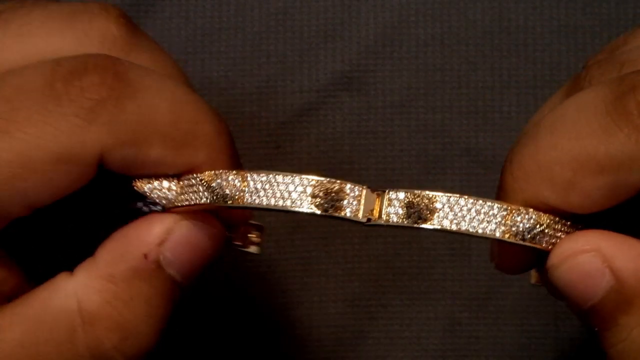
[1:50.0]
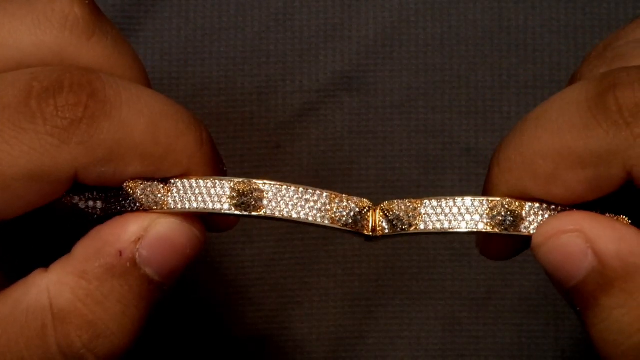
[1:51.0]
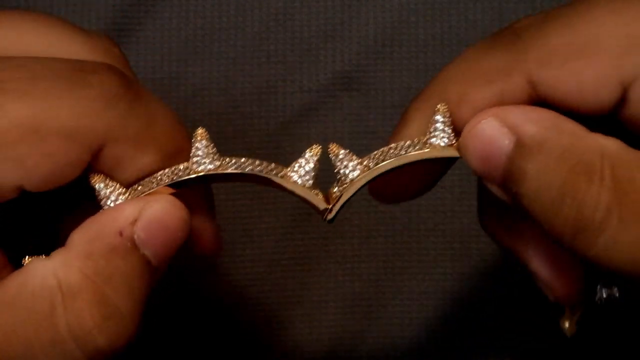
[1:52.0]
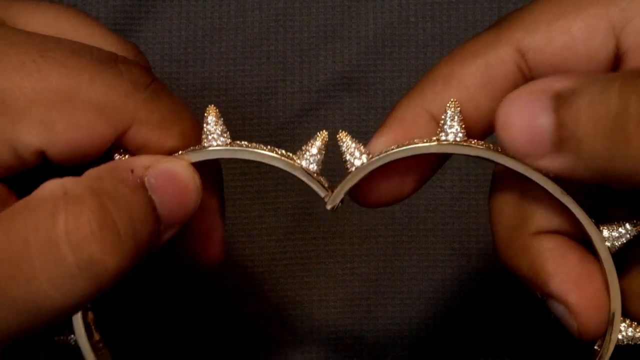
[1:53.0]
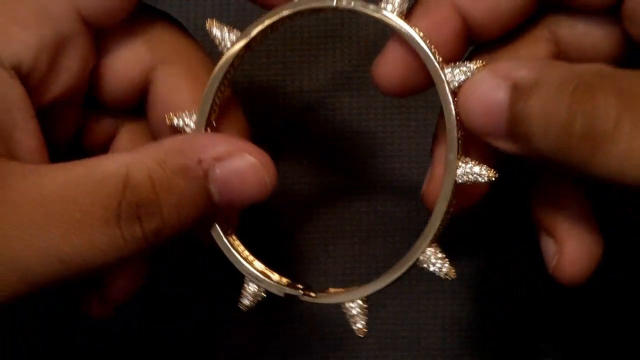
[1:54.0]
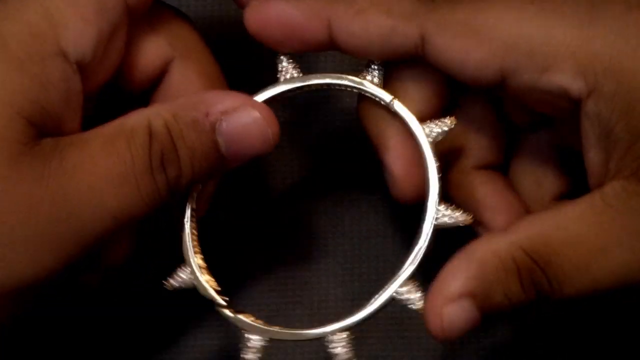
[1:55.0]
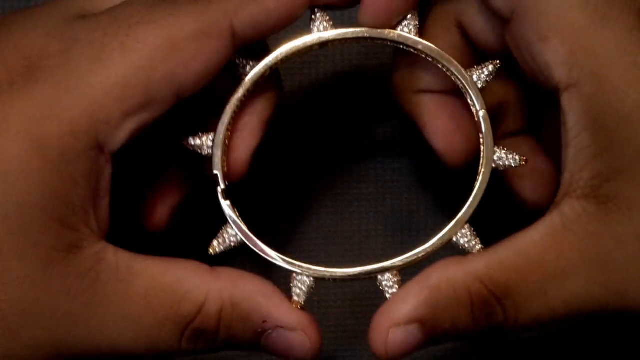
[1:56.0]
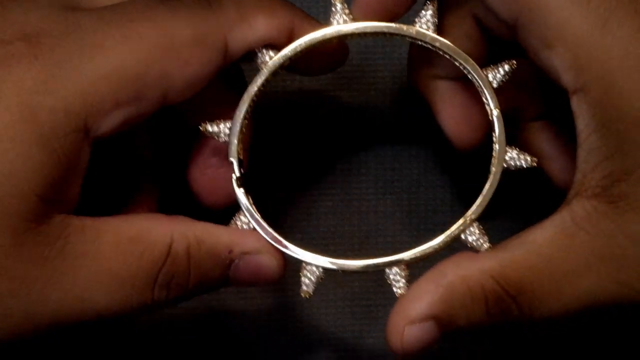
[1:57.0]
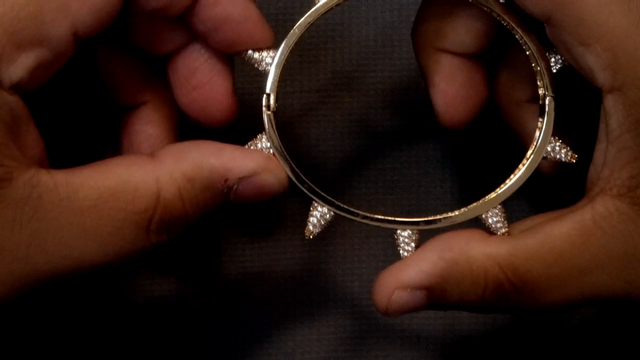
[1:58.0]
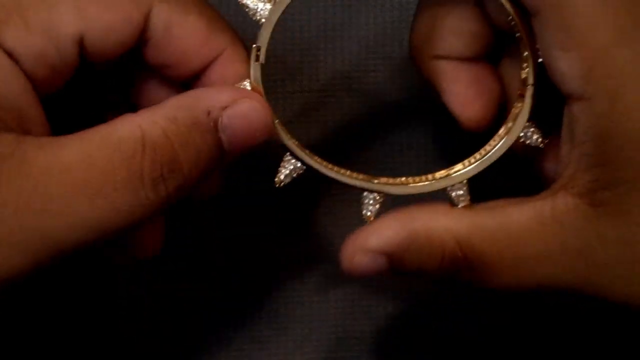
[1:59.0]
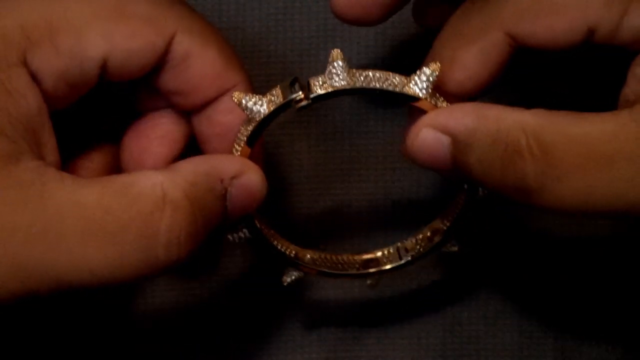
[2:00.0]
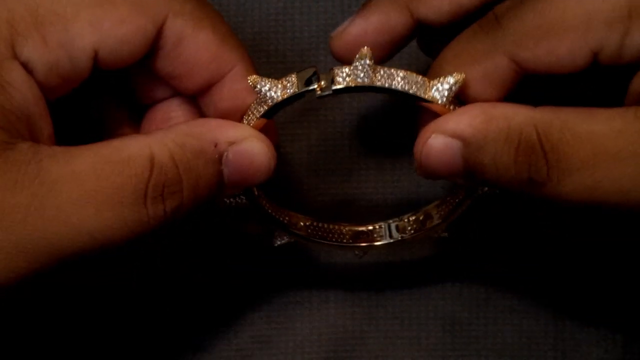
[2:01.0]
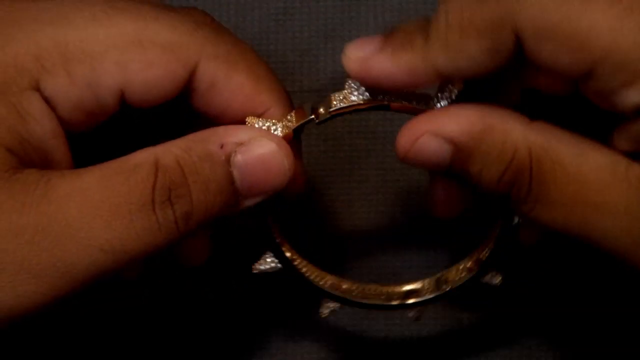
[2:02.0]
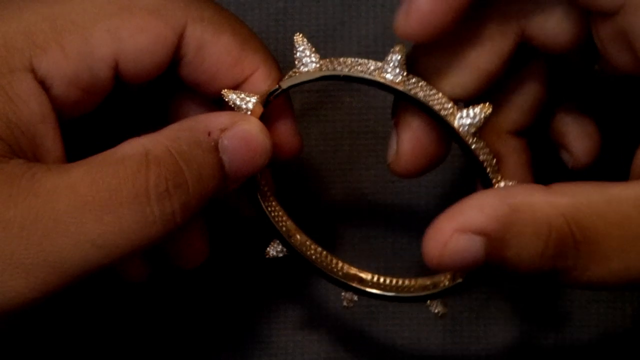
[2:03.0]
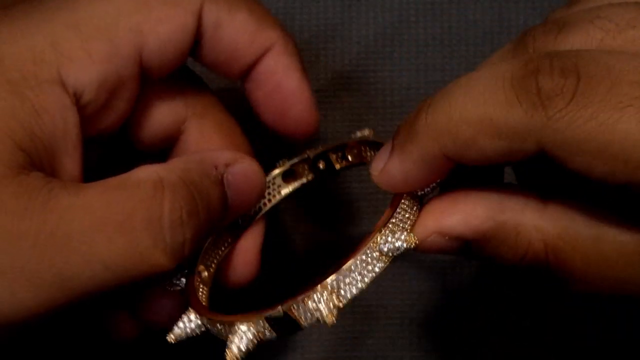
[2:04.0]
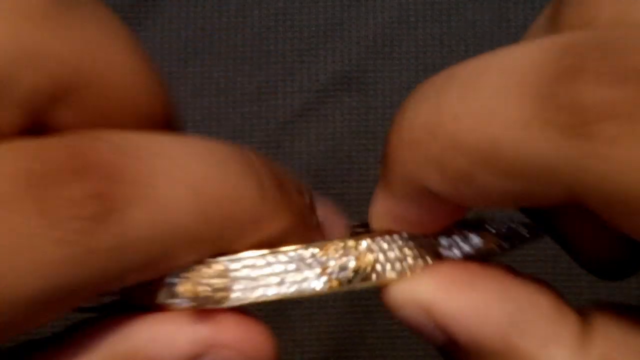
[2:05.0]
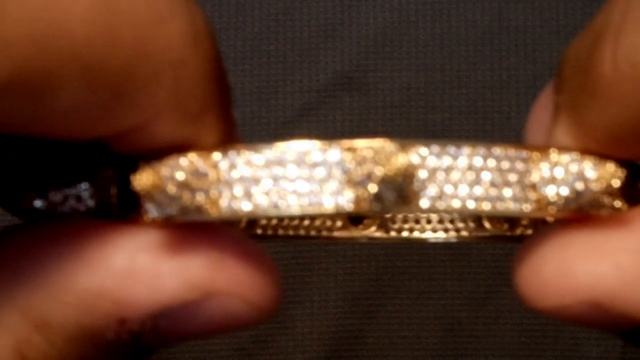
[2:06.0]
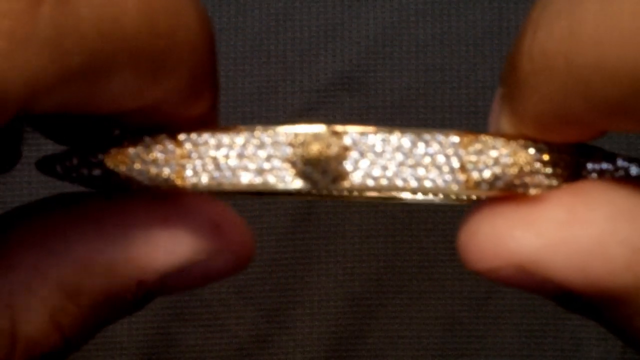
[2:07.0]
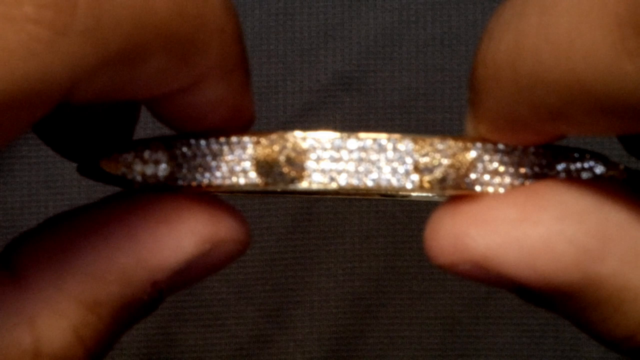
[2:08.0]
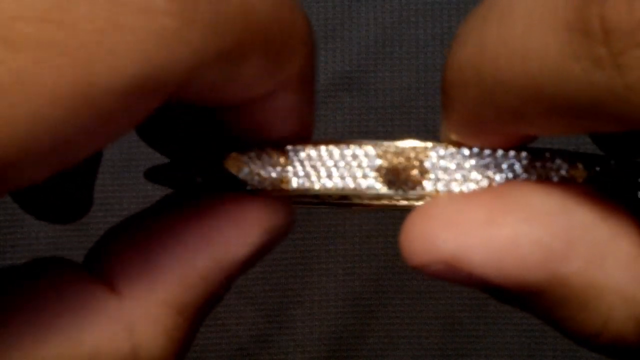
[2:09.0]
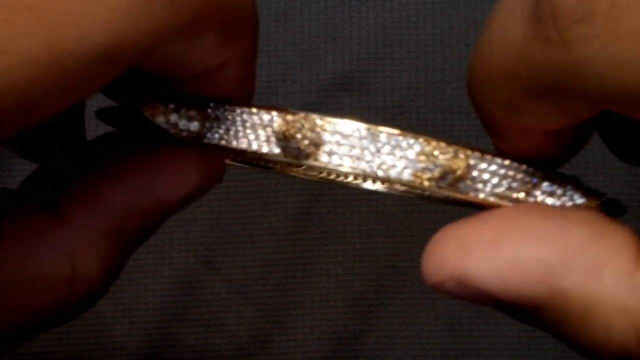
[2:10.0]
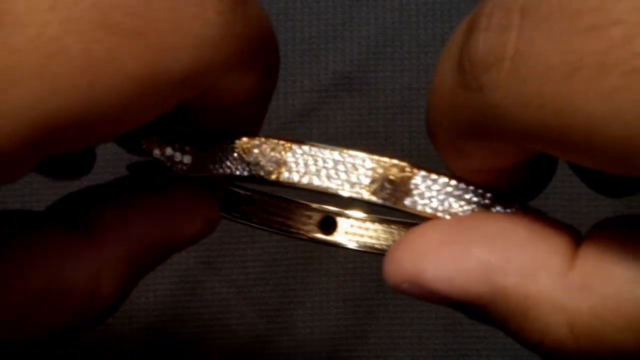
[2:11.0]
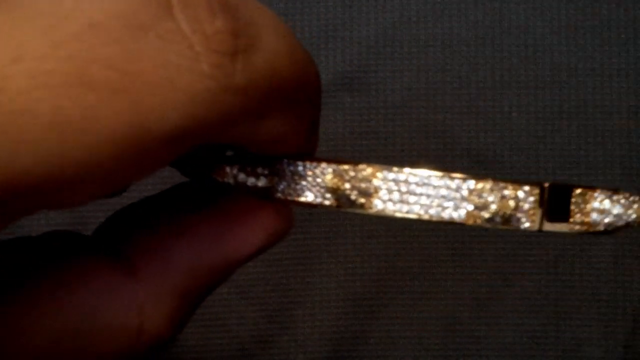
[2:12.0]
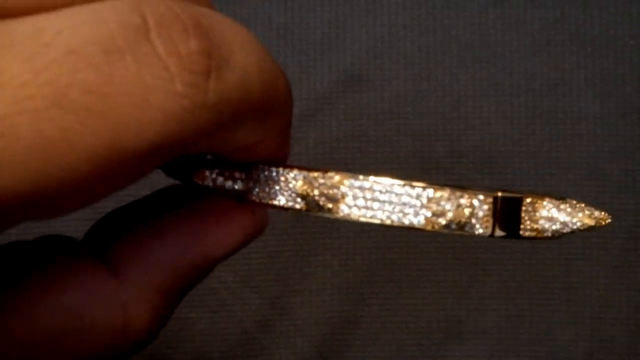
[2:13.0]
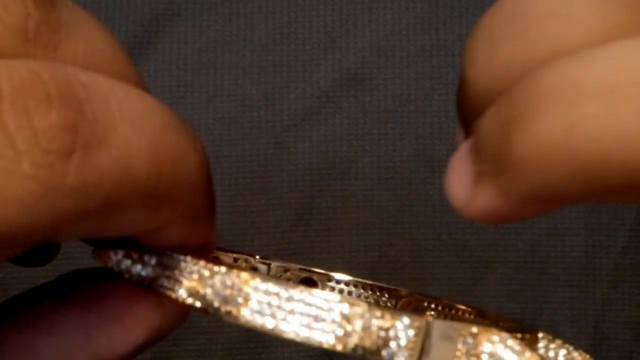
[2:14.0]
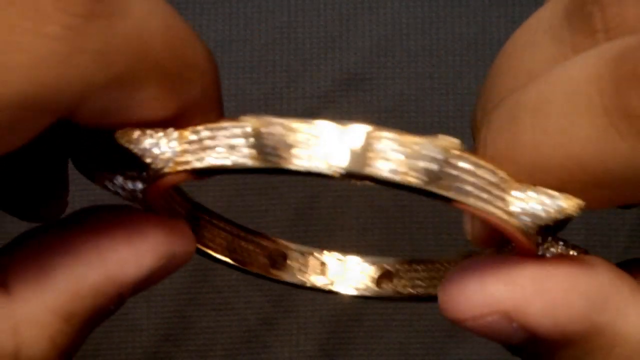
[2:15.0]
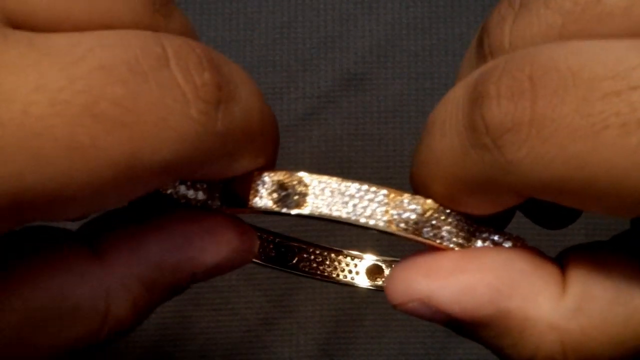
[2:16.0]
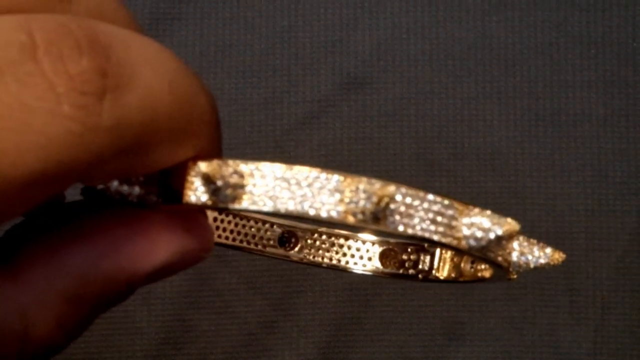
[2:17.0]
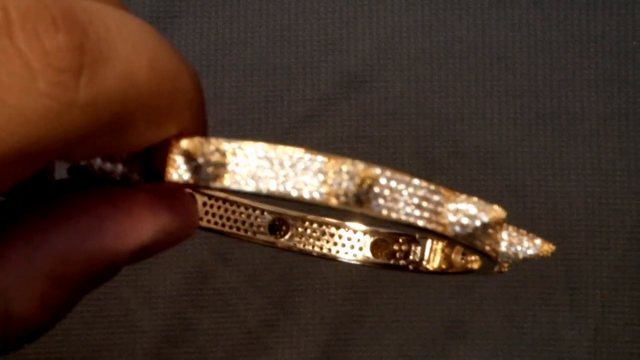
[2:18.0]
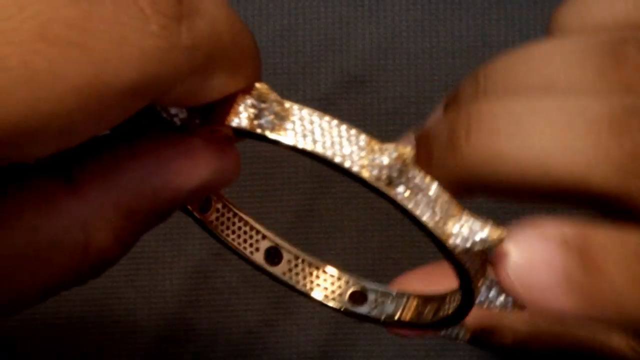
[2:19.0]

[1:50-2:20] When the bangle is open, its shape makes the letter M. He puts it closer to the camera, showing how shiny it is. The inside is plain and a little gold, while the outside has decoration with gold and diamonds. The background where he puts his hand is black.